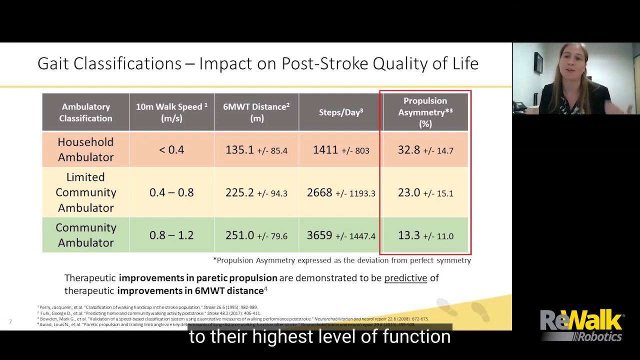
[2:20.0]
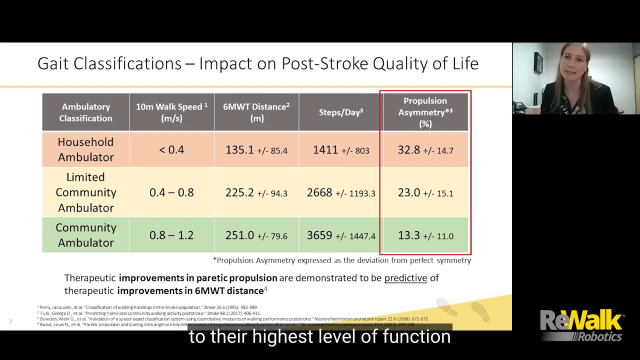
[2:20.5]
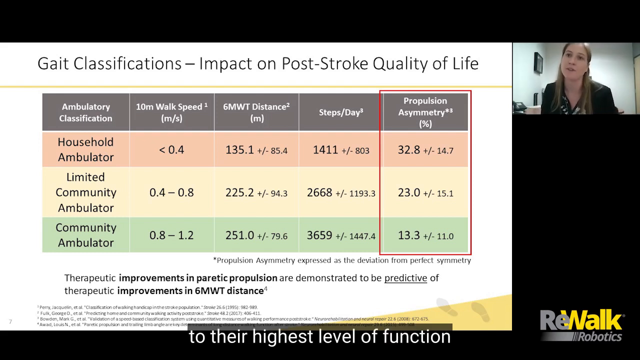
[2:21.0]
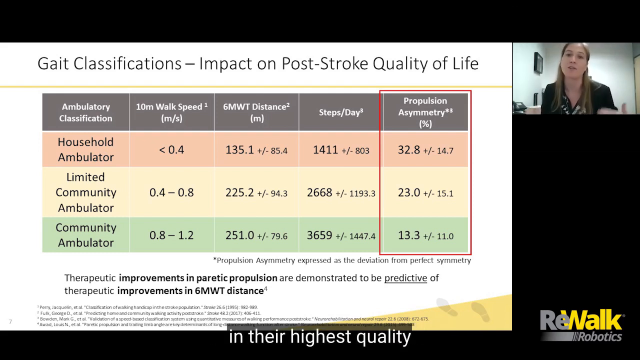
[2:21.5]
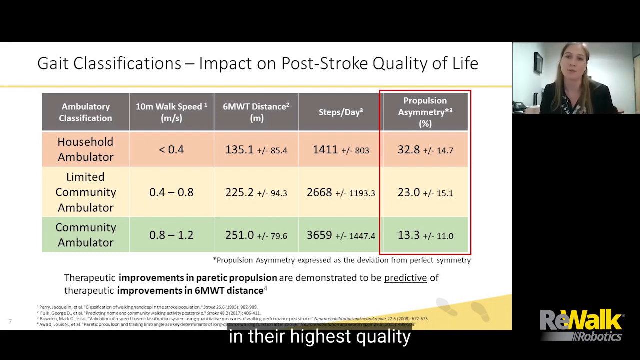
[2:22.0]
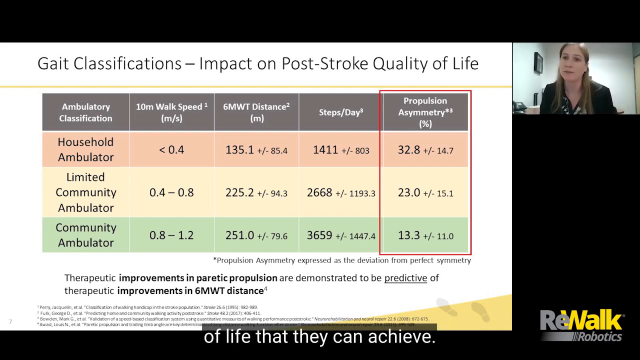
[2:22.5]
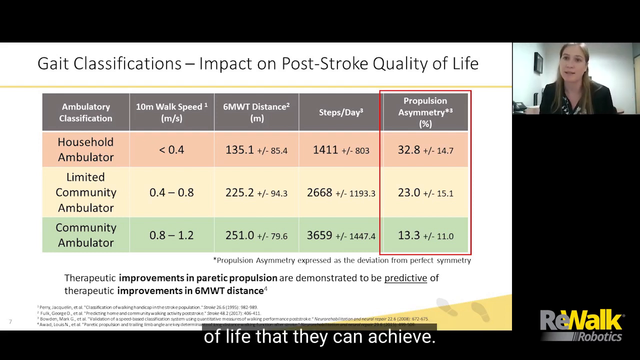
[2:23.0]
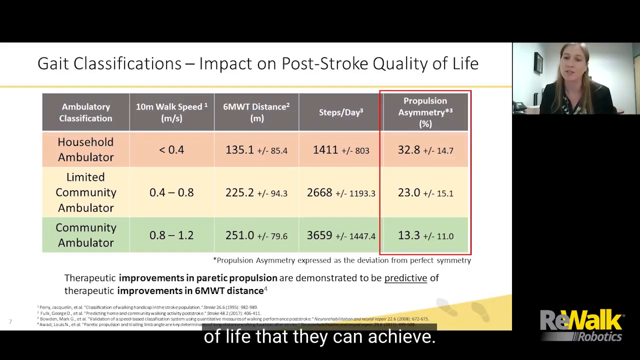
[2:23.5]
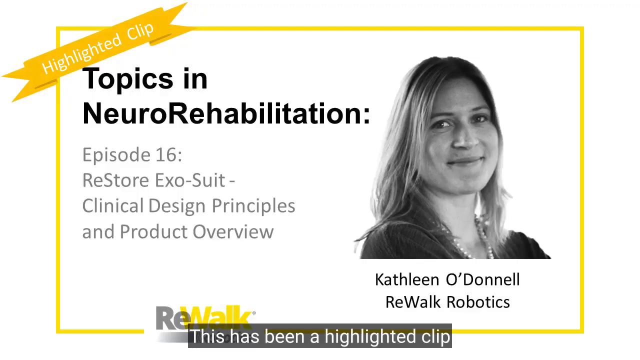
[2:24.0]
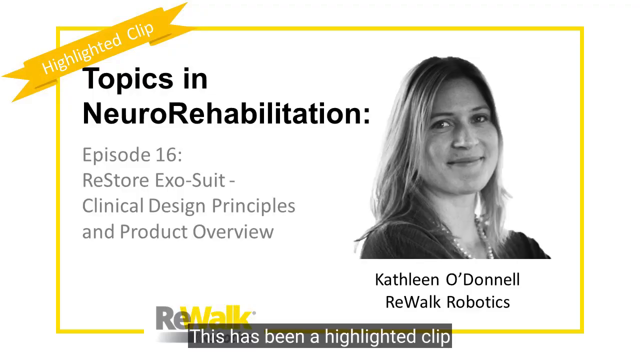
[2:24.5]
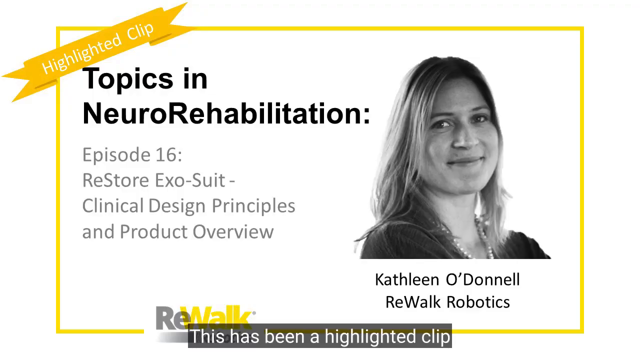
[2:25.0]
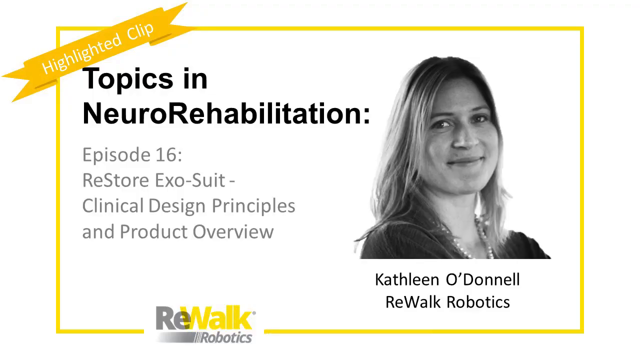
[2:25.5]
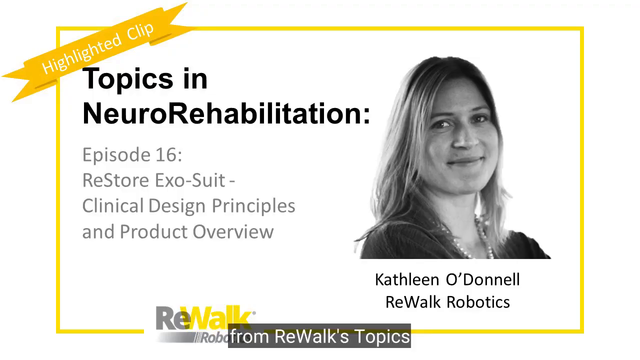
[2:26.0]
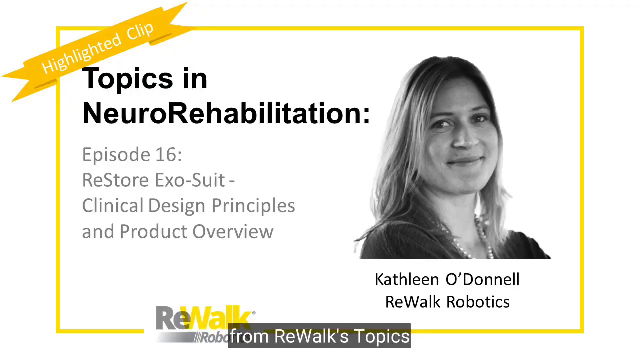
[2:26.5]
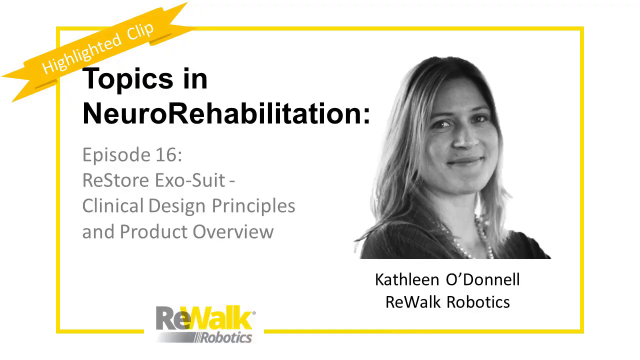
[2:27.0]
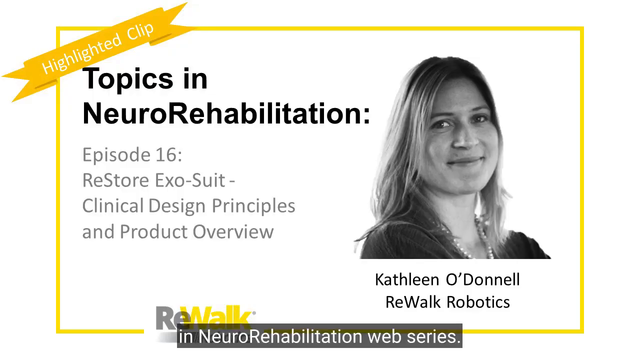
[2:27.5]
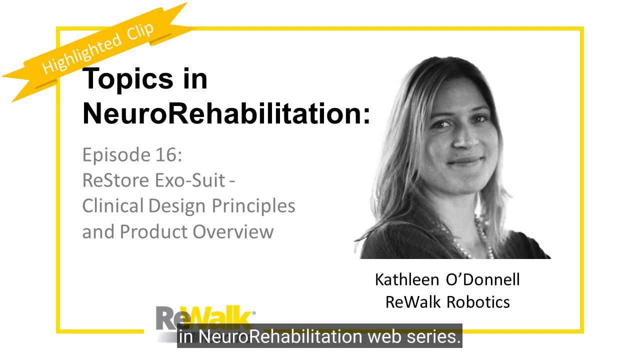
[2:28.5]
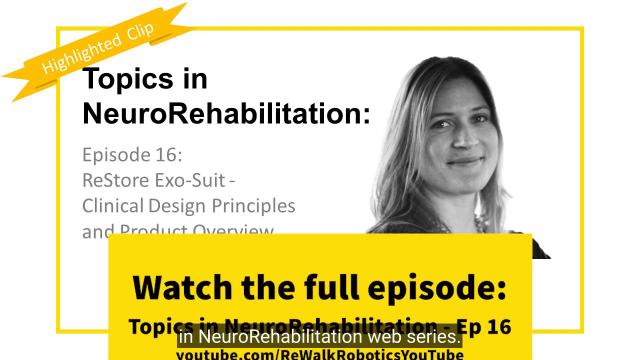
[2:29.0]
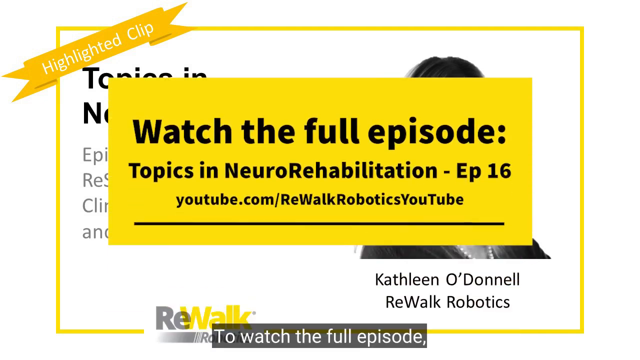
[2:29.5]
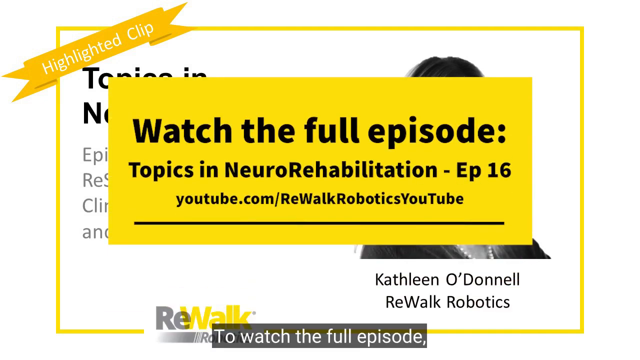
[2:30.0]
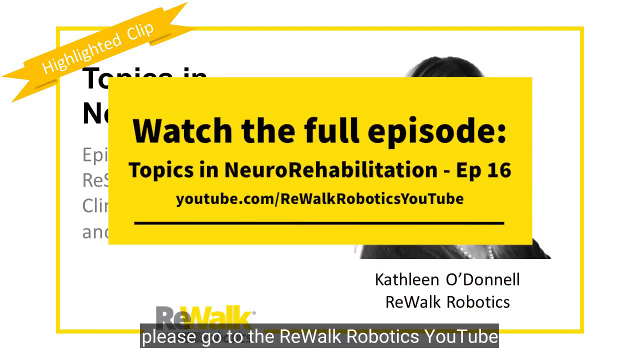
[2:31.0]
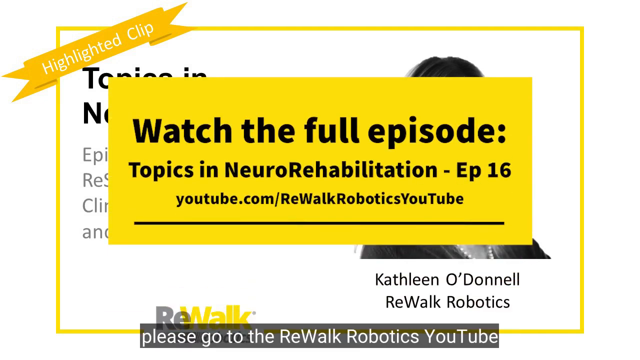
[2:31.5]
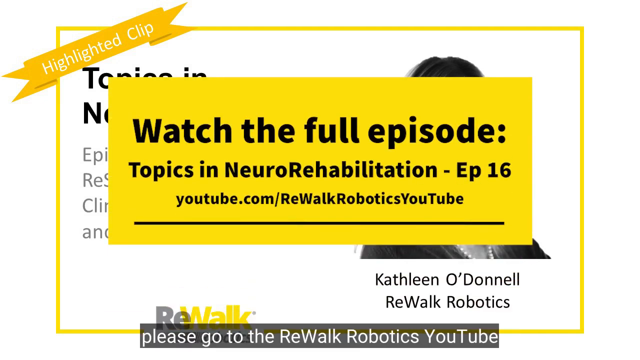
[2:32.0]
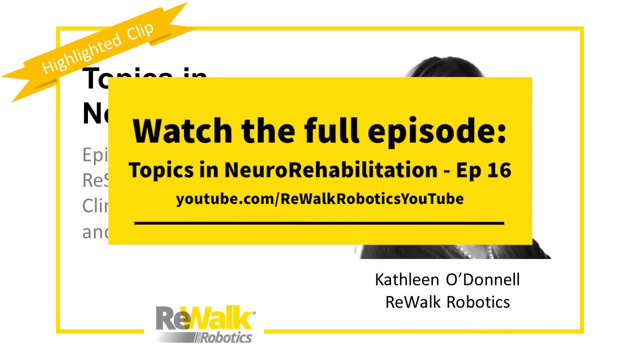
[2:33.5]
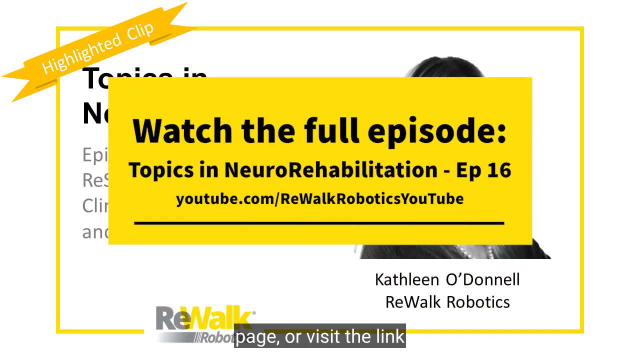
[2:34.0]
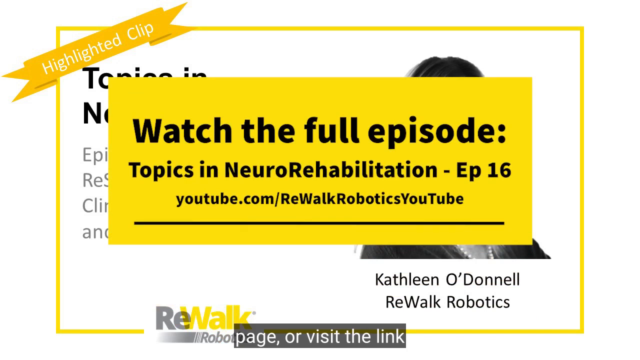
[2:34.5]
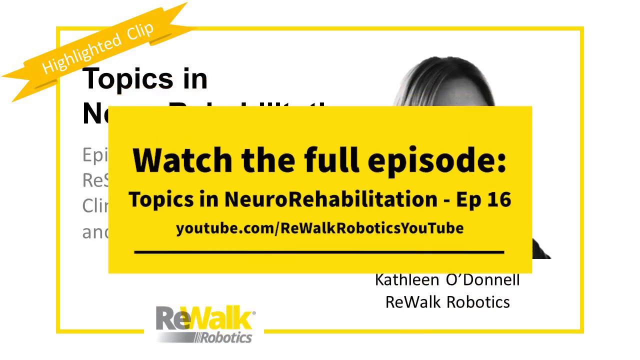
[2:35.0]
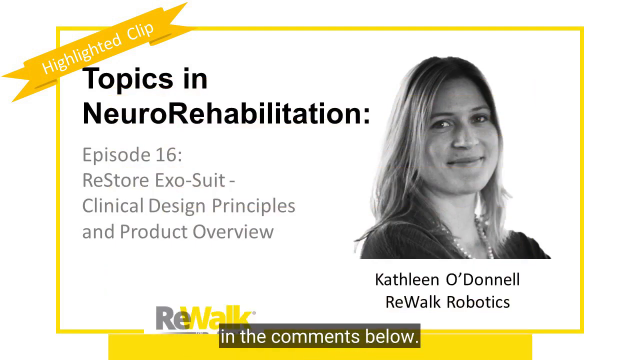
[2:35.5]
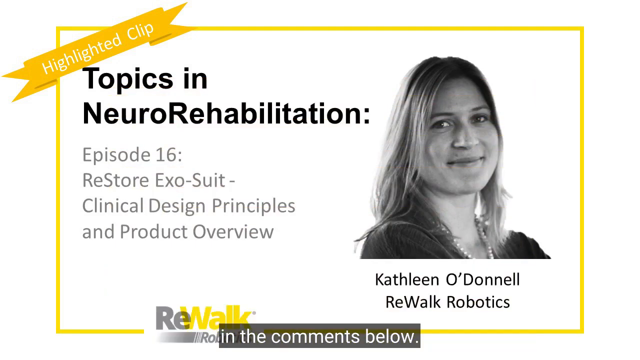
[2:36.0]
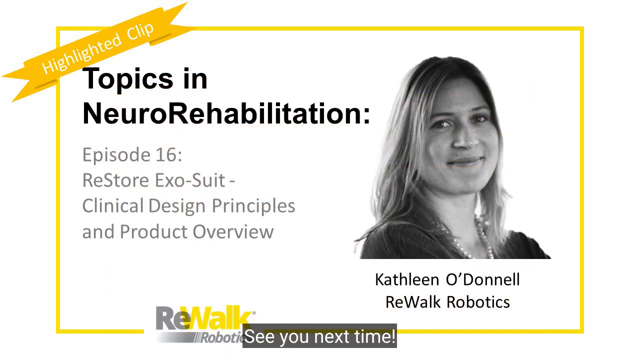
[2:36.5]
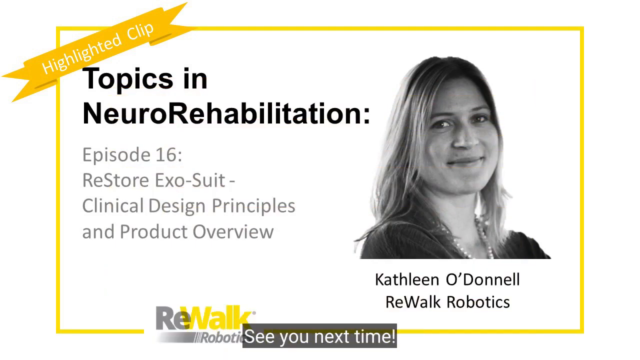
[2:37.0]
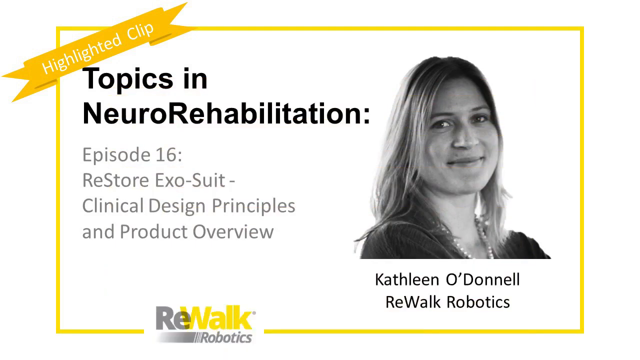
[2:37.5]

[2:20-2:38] The slide reads "GAIT classifications, impact on post-stroke quality of life," listing household ambulator, limited community ambulator, and community ambulator under ambulatory classification, along with walk speed, 6MWT distance, steps per day, and propulsion asymmetry. An end screen follows for "Topics in Neurorehabilitation," episode 16, by Kathleen O'Donnell of Rewalk Robotics, inviting viewers to watch the full episode, with the address www.youtube.com.au. In a gray room with a door on the right, the woman appears to be talking. For steps per day, household ambulatory shows 1.5 thousand, limited community ambulatory 2.6 thousand, and community ambulatory 3.6 thousand.